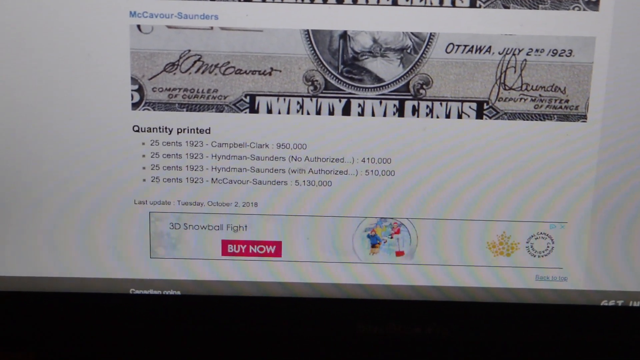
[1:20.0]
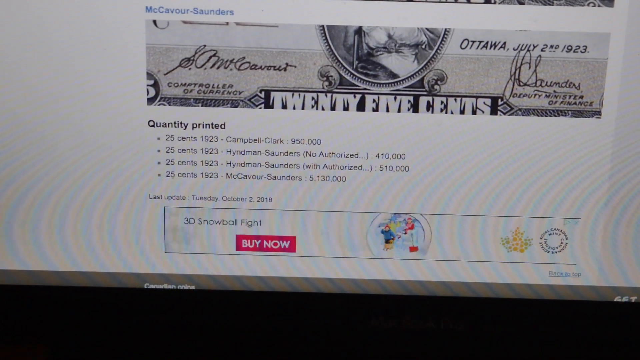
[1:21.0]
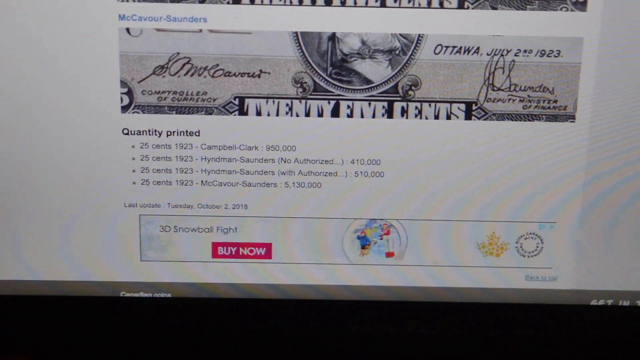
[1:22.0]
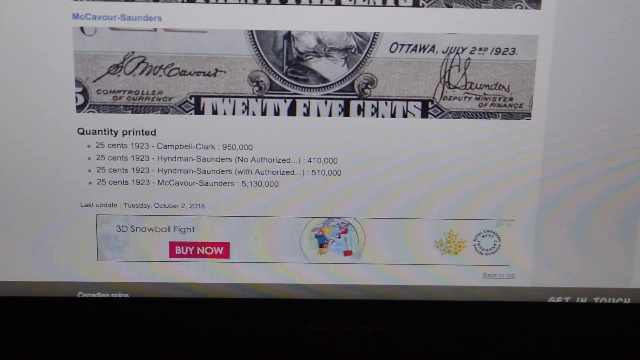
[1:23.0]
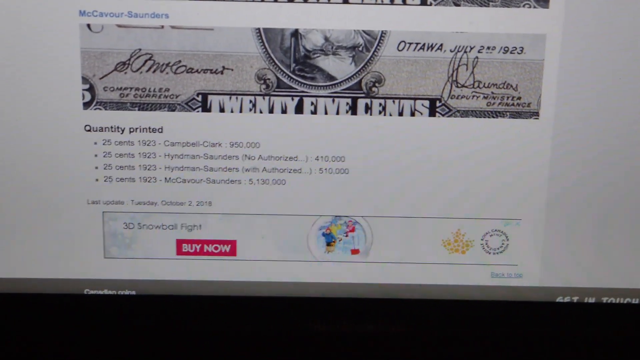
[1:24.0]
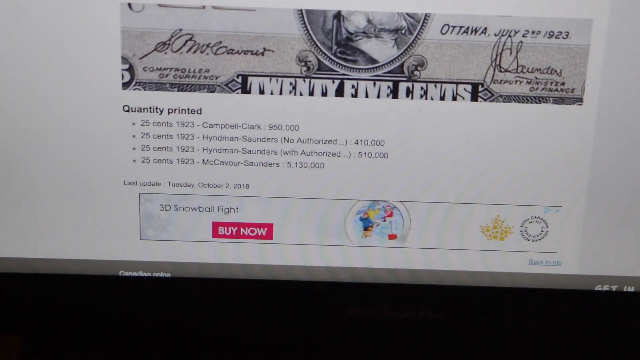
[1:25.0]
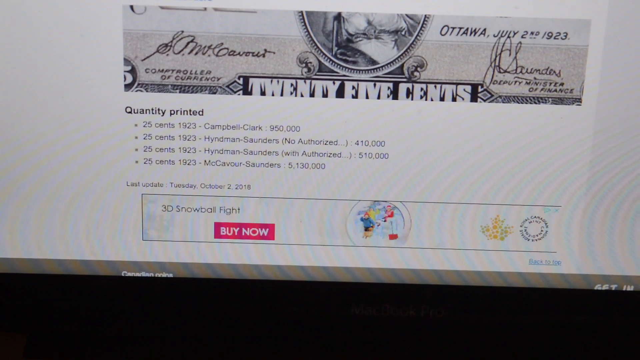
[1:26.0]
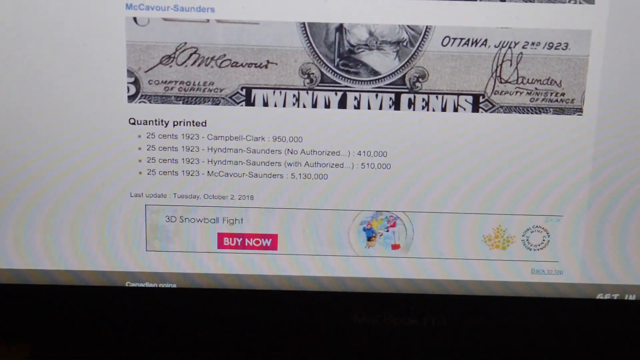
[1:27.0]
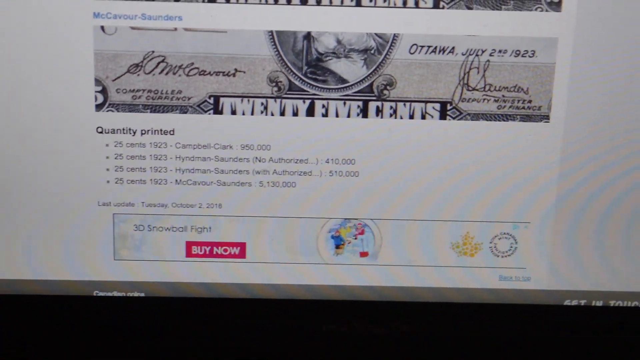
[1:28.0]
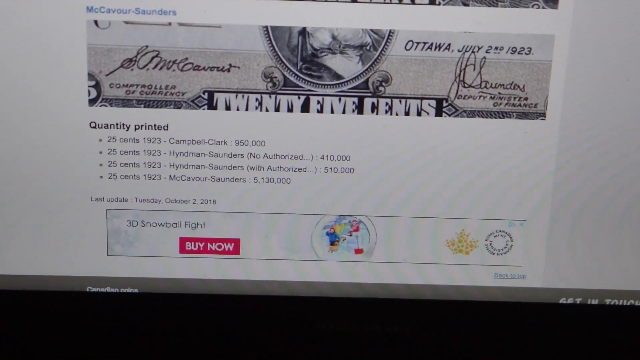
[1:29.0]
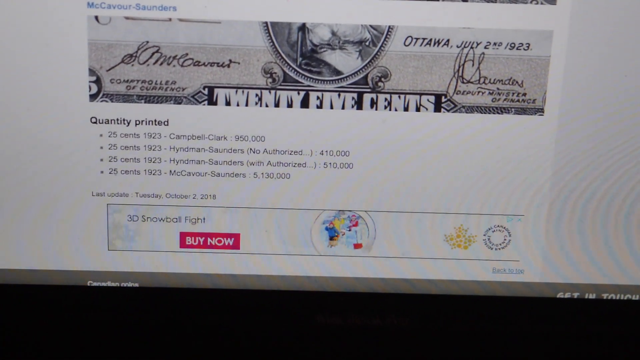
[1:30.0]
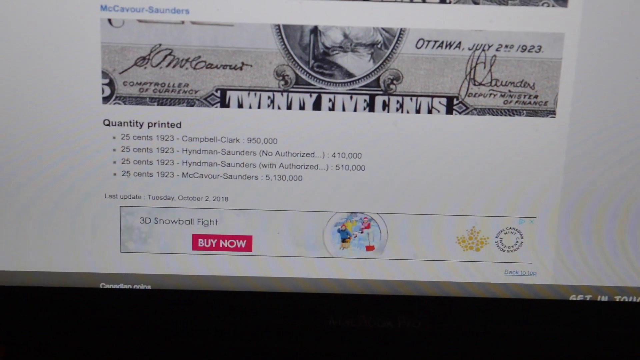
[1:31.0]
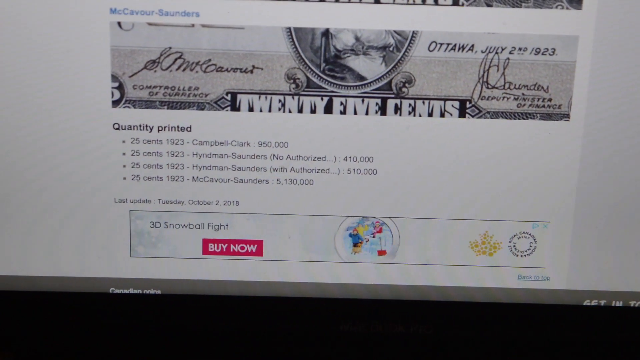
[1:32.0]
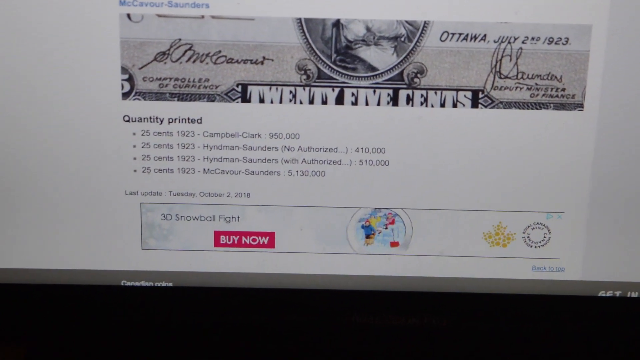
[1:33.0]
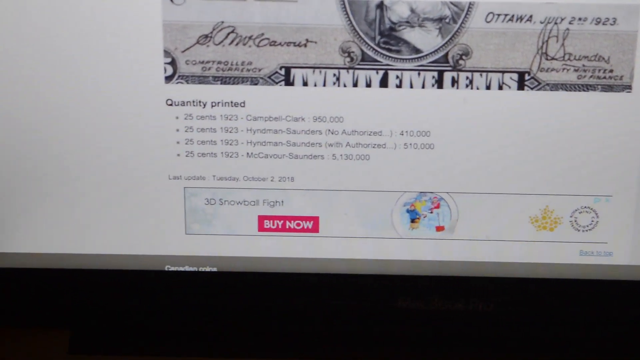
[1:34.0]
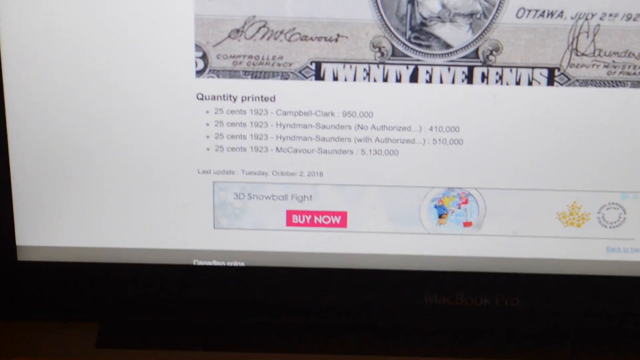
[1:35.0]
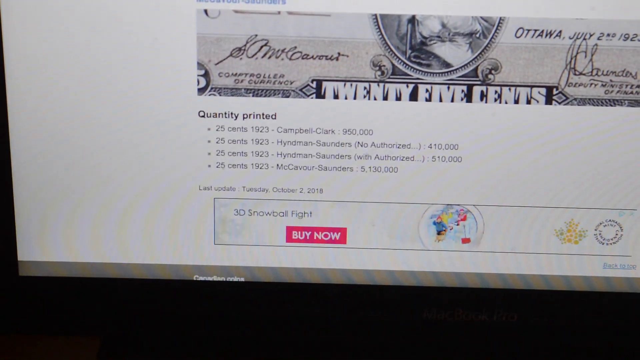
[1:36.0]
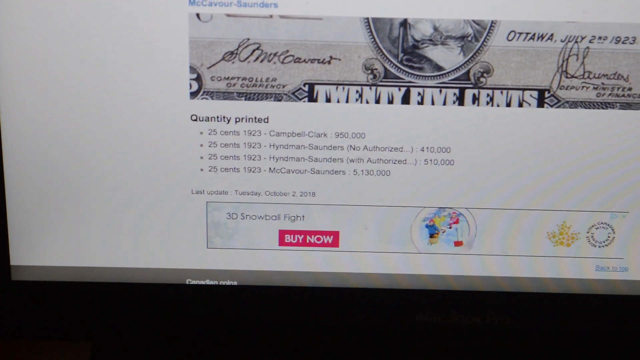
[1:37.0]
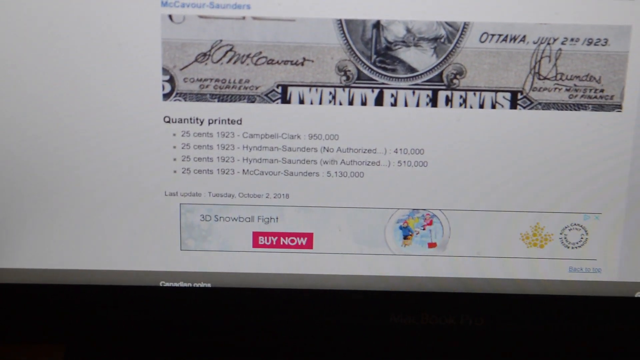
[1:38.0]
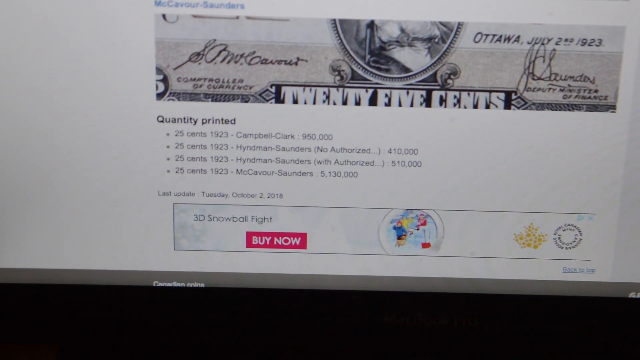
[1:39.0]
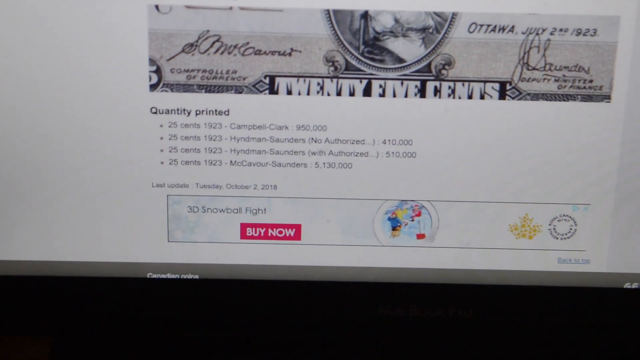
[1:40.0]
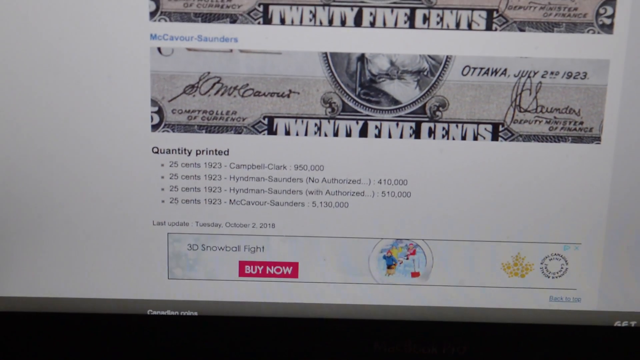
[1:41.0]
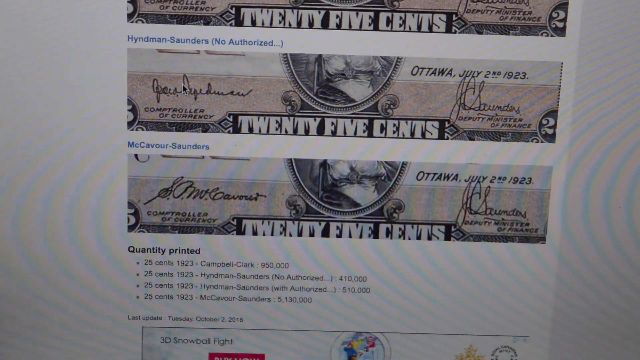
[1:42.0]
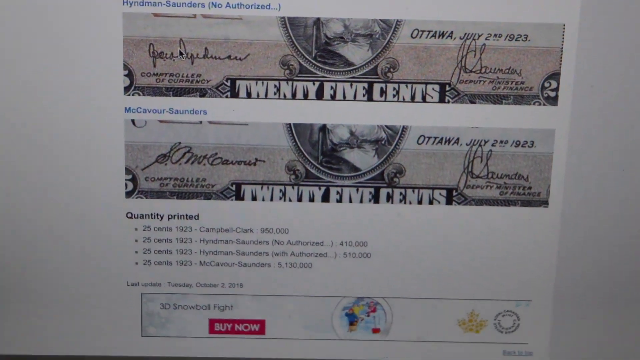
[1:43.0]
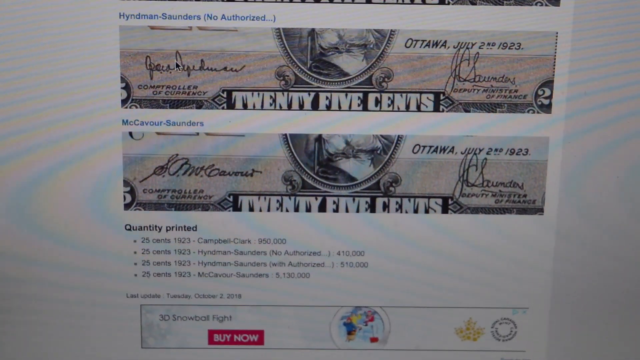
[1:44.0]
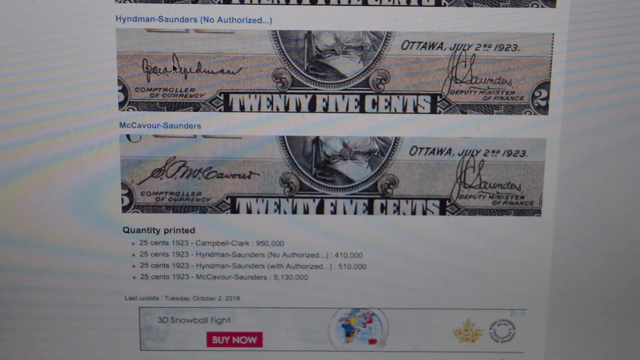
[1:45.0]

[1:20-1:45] The copy of the Canadian bill is shown on a computer screen, with a red button reading "buy now" and "3D snowball fight." The bill has a signature on the left side and says "Ottawa" on the right. "Quantity printed" appears, "25 cents" appears four times, "1923" is written four times, and the bill says "will pay on demand." A woman holding a pitchfork wears a hat that looks like one from the ancient Greek era. He turns the bill back over, showing "25 cents"; the paper looks extremely old. His hand is visible throughout.